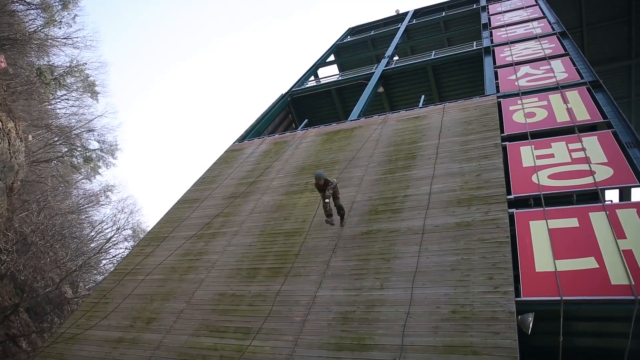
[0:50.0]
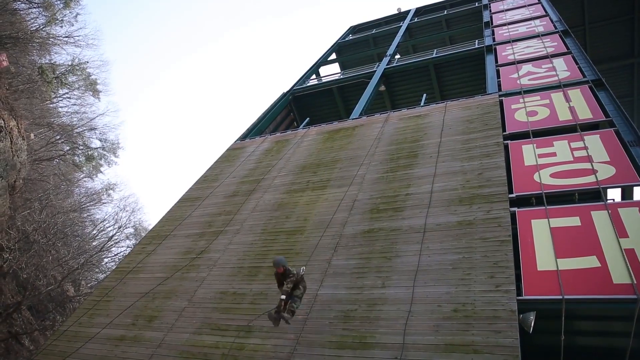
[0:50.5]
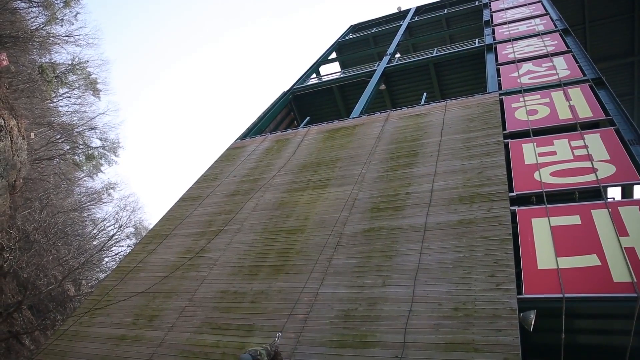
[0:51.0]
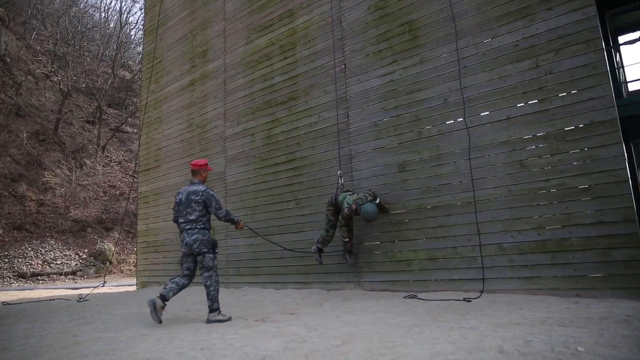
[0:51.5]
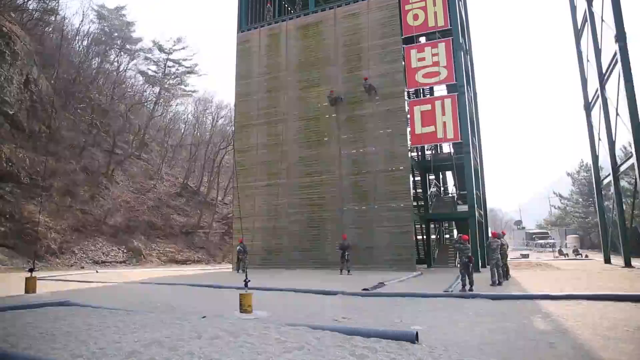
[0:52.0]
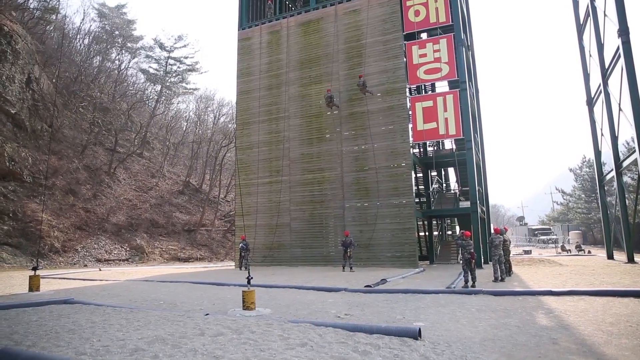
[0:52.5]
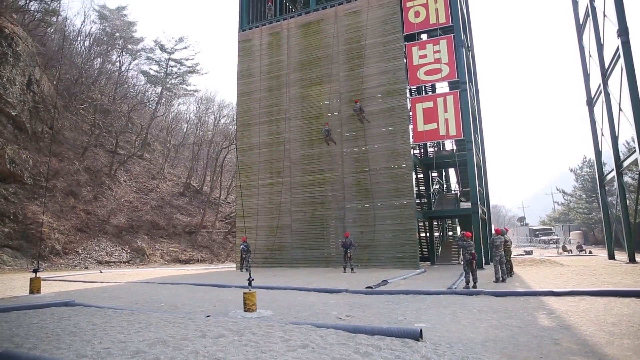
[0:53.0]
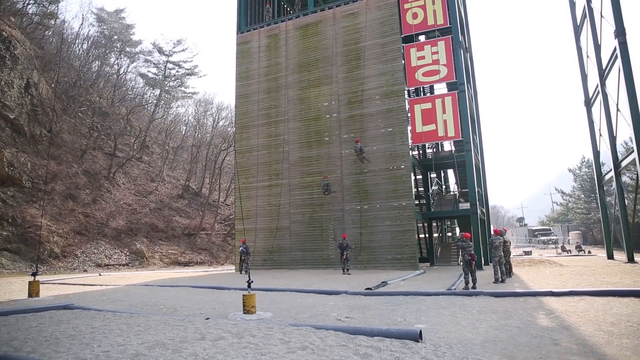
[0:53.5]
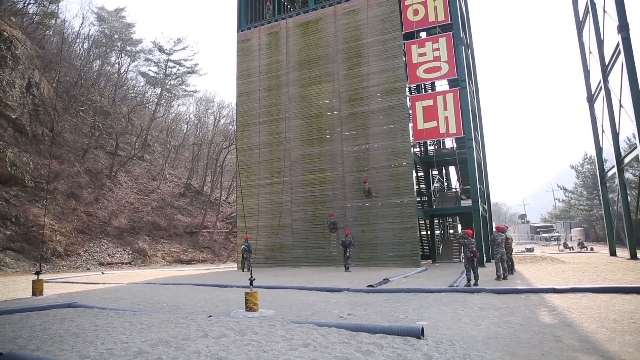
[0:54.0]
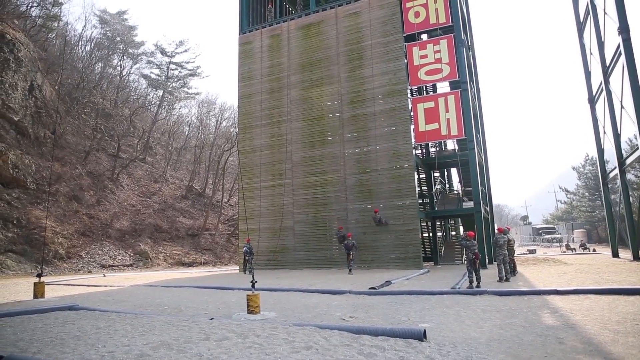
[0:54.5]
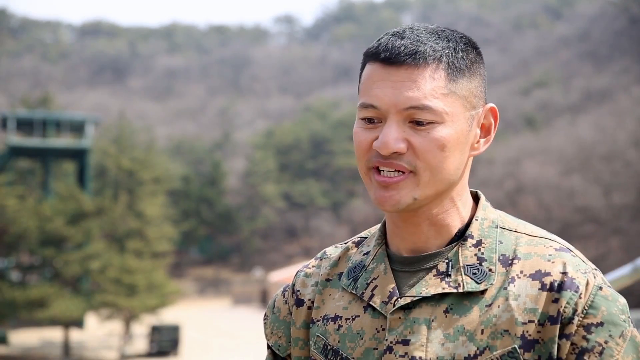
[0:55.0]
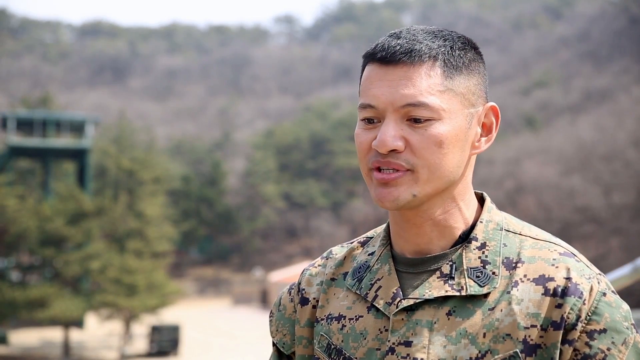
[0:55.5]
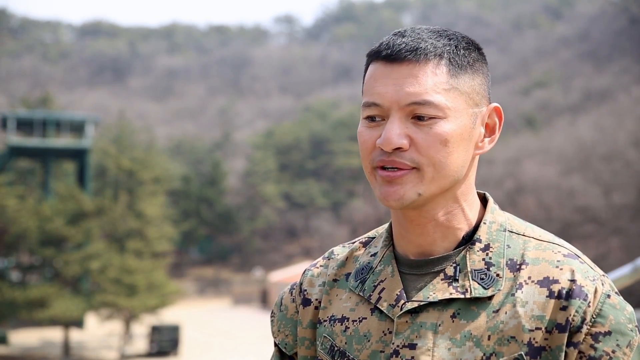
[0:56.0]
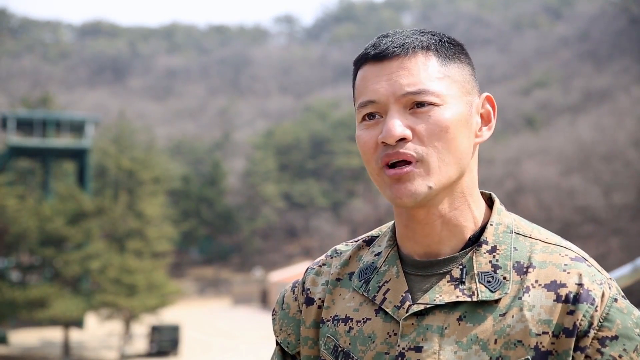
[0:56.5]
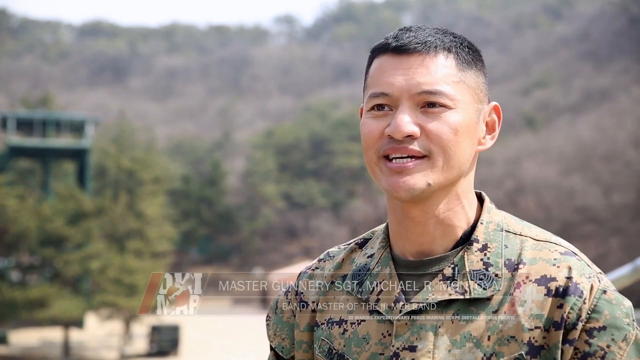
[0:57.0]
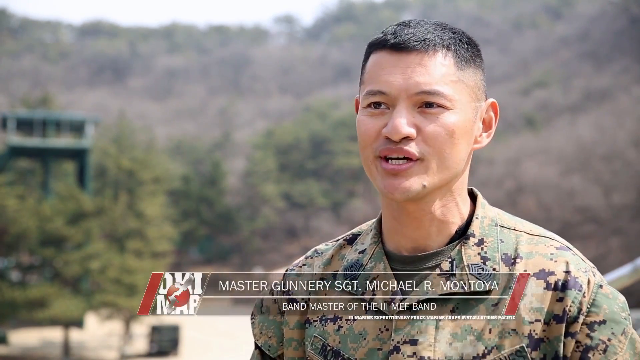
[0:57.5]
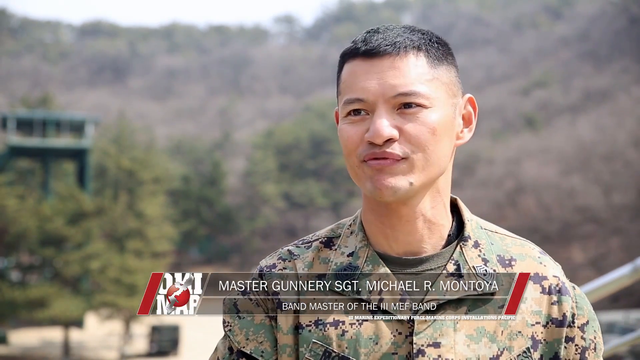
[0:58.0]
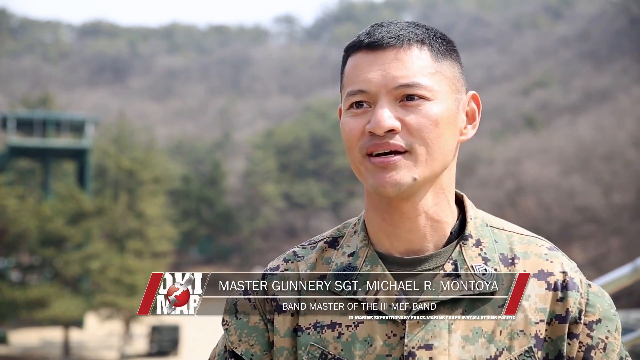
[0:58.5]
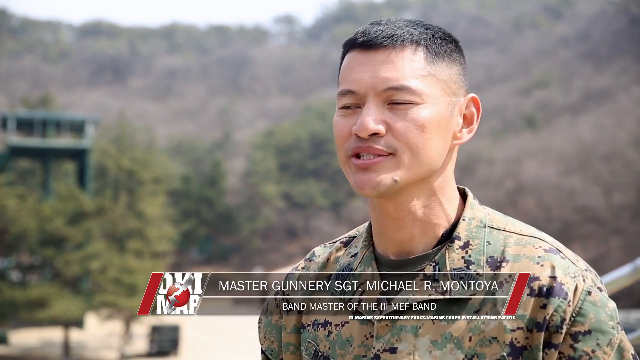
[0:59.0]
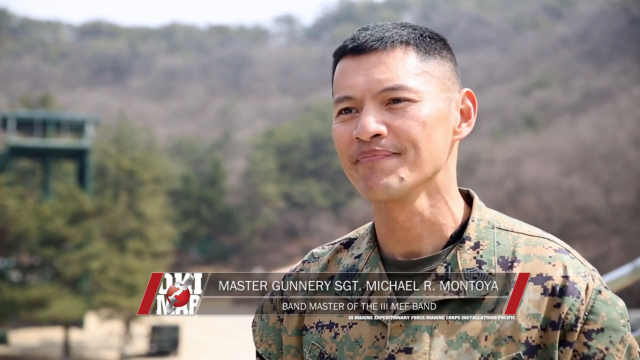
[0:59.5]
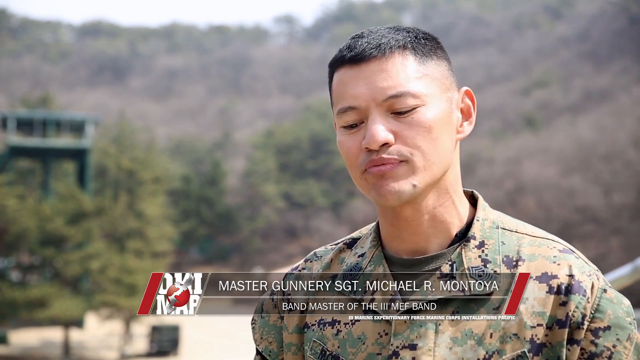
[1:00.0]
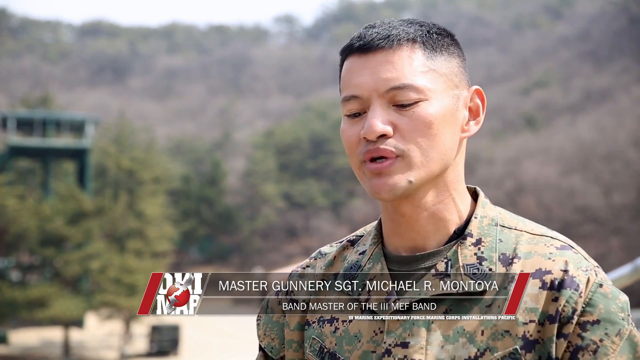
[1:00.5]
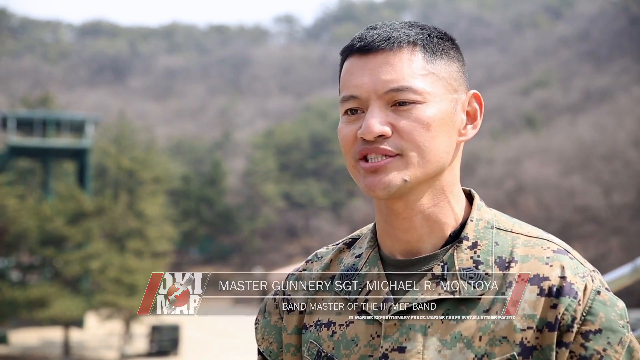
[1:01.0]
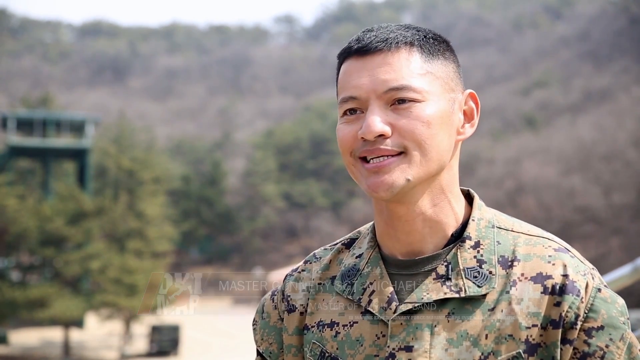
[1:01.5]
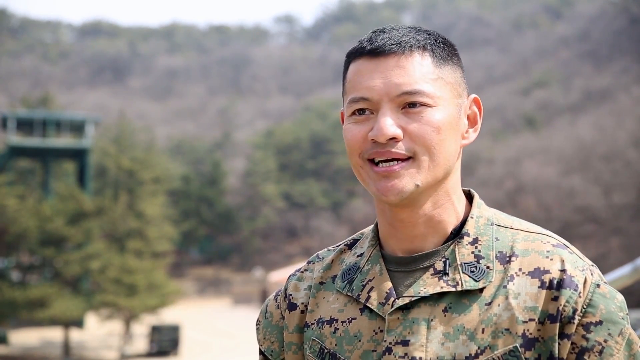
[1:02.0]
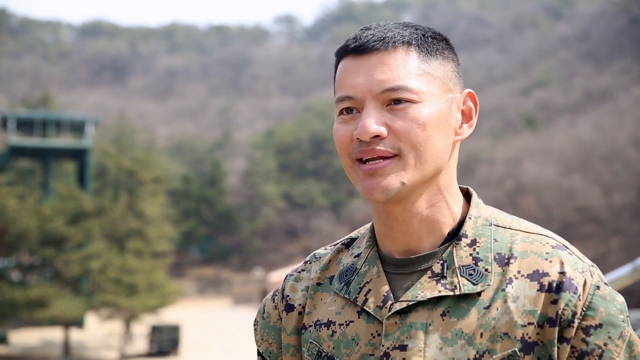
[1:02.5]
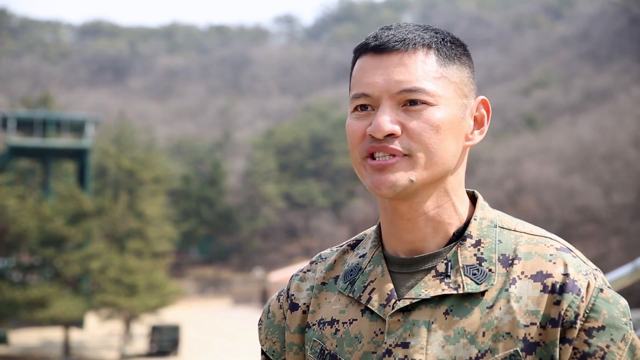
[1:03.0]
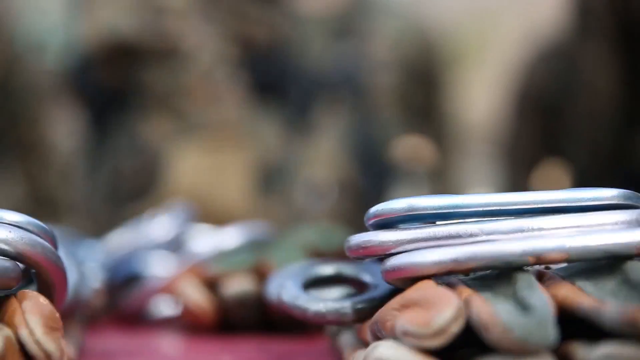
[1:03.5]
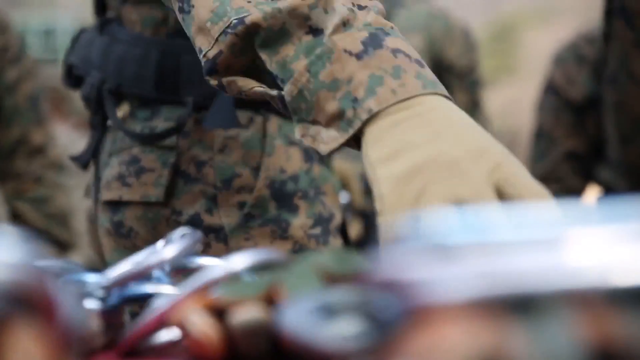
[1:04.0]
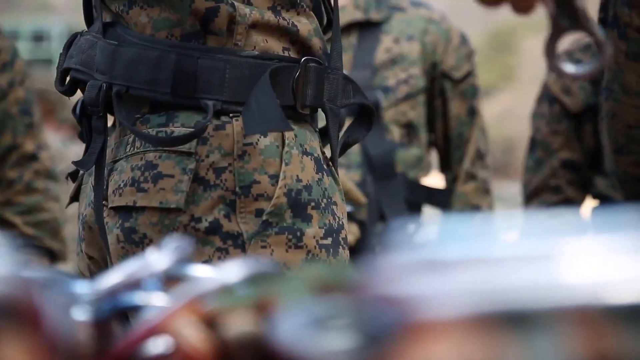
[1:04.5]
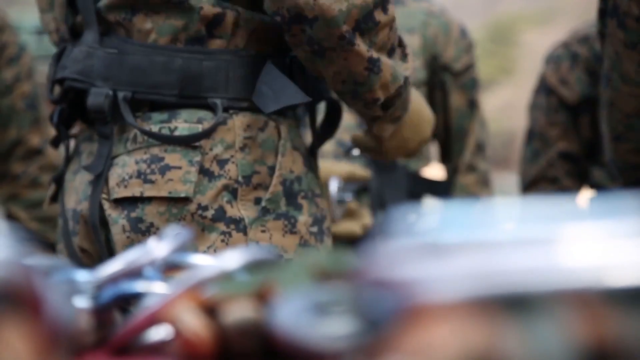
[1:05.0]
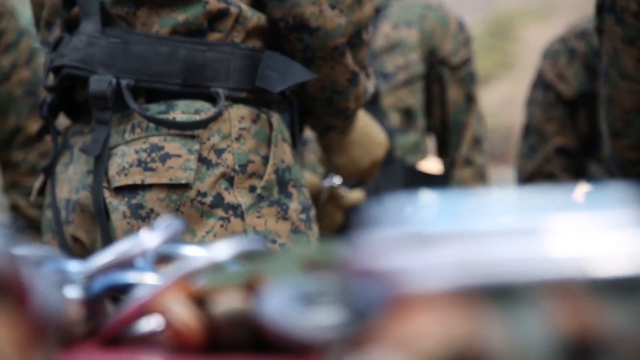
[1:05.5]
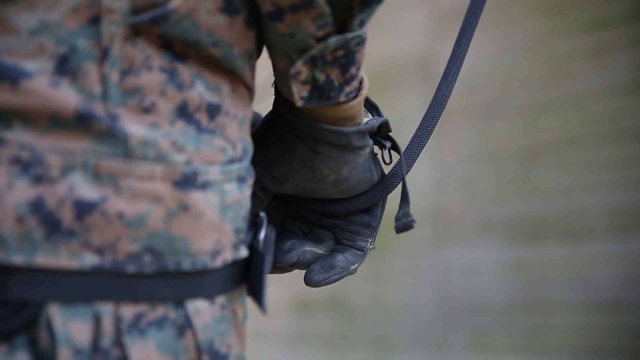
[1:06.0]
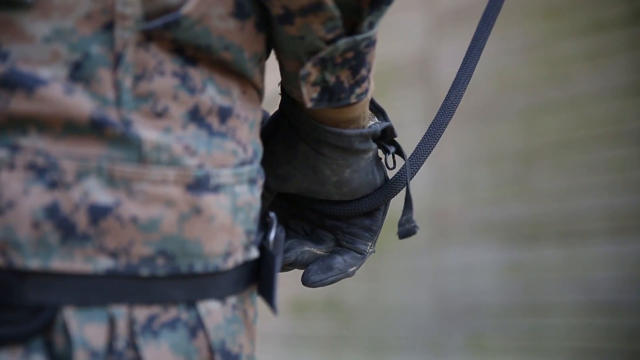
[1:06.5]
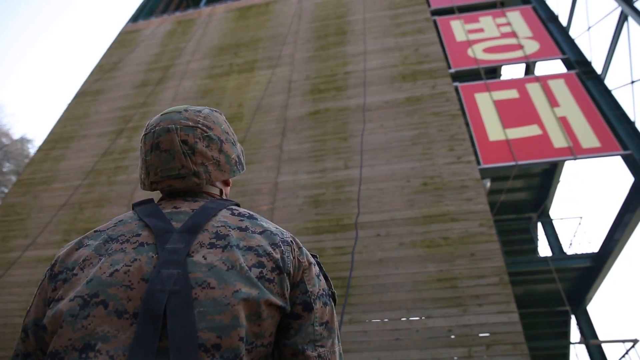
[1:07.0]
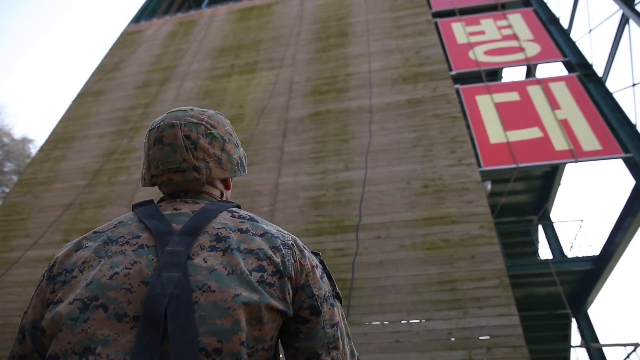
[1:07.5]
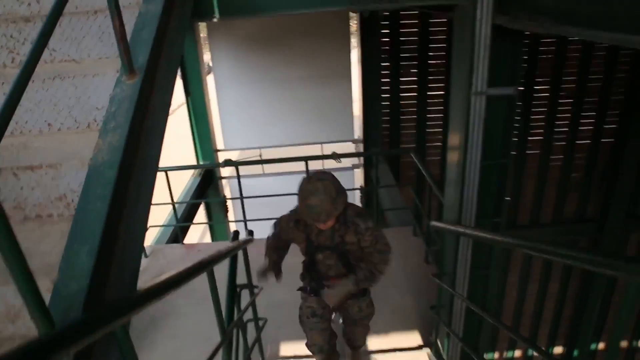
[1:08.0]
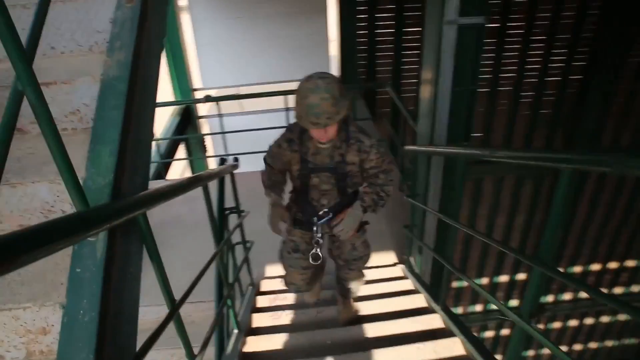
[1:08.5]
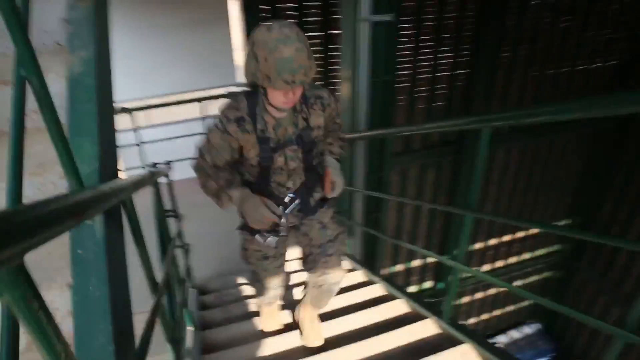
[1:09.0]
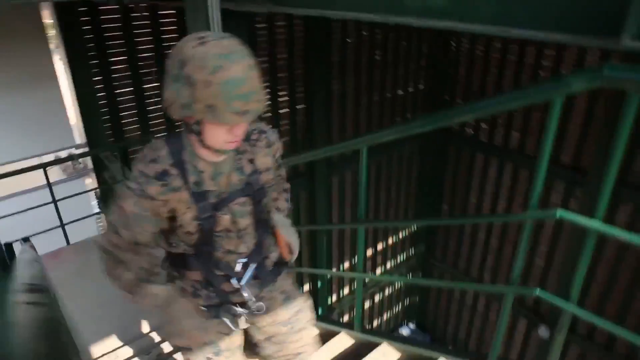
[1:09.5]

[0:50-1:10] The large tower in the parade area has a front covered in wooden planks and is many metres tall. A soldier in a harness jumps from the top section of the wooden-planked wall and falls front first, held by a rope from an instructor with a red hat at the front. He descends quickly but slows before reaching the ground and lands gently. Two other soldiers do the same, abseiling down the wall of the tower to the instructors below. A soldier speaks to the camera: he is Master Gunnery Sergeant Michael R. Montoya, Bandmaster of the 3rd MAF Band, and he talks animatedly. A close-up shows a soldier handing out climbing hooks or clasps to the soldiers, and then a soldier climbs the stairs to the top of the tower.